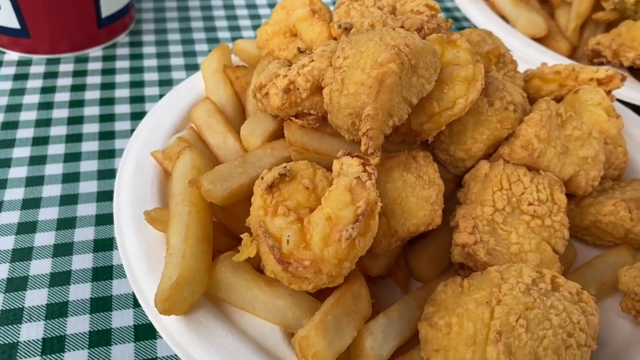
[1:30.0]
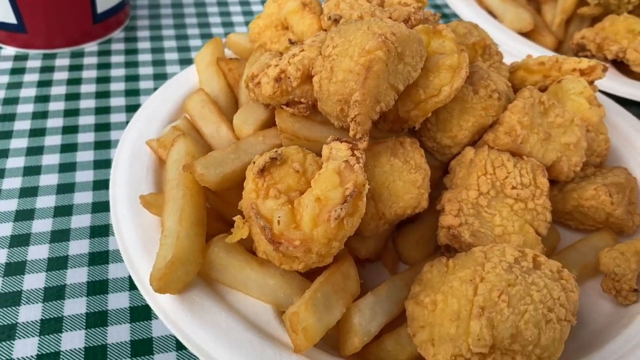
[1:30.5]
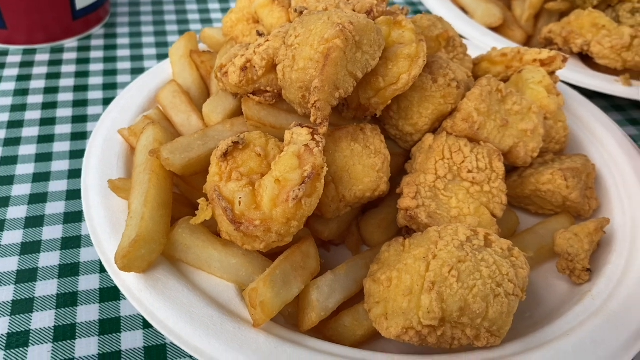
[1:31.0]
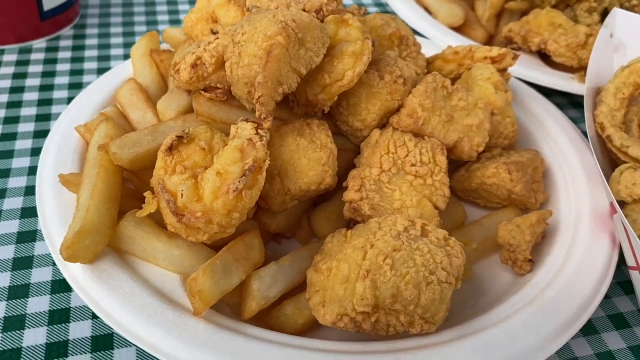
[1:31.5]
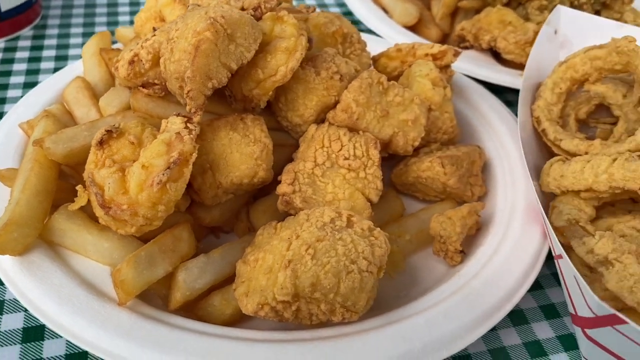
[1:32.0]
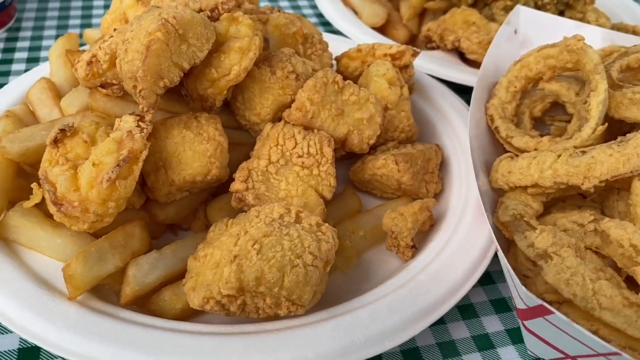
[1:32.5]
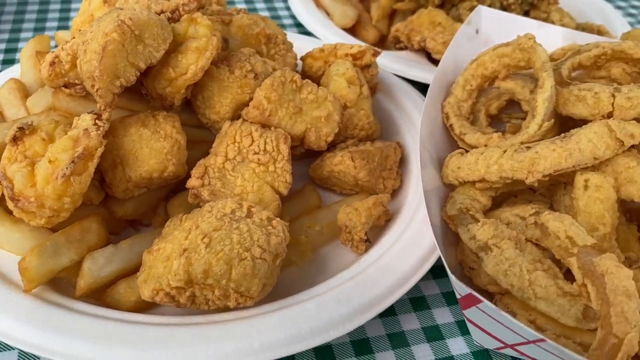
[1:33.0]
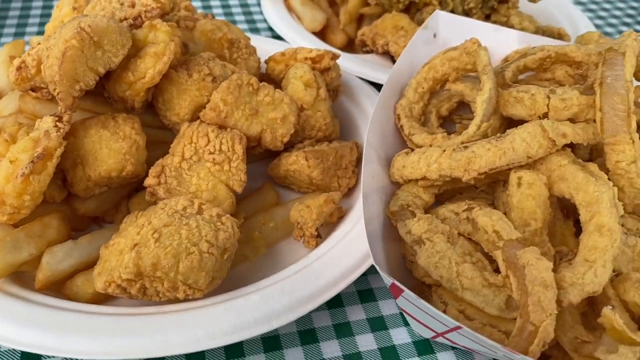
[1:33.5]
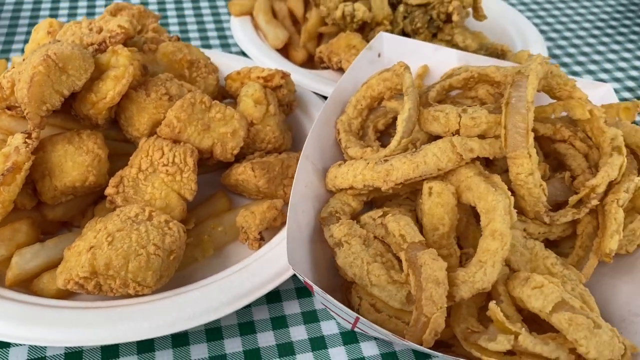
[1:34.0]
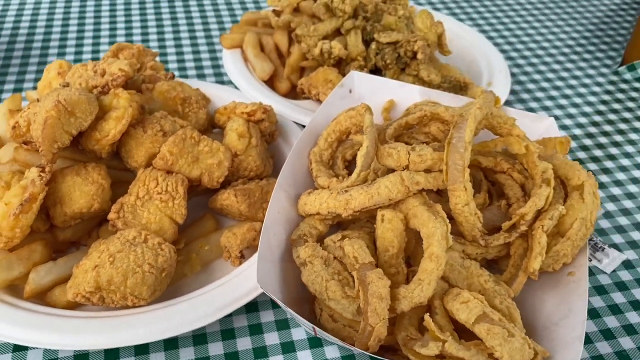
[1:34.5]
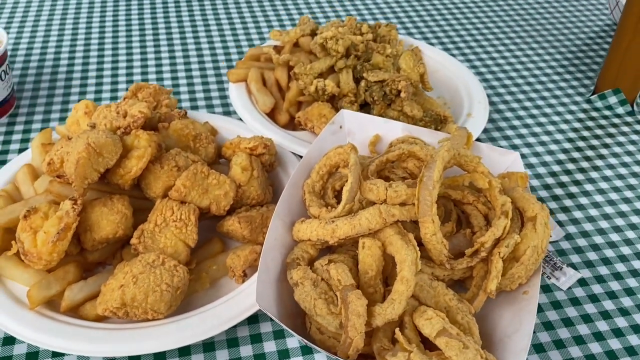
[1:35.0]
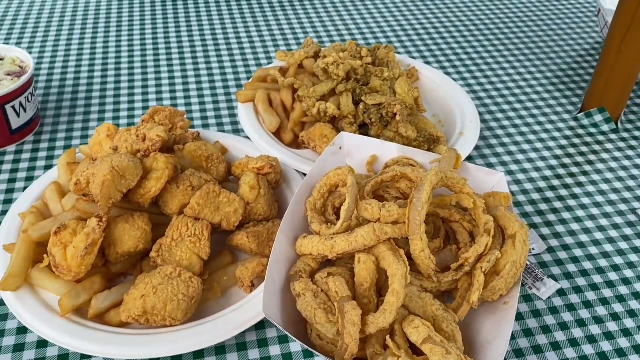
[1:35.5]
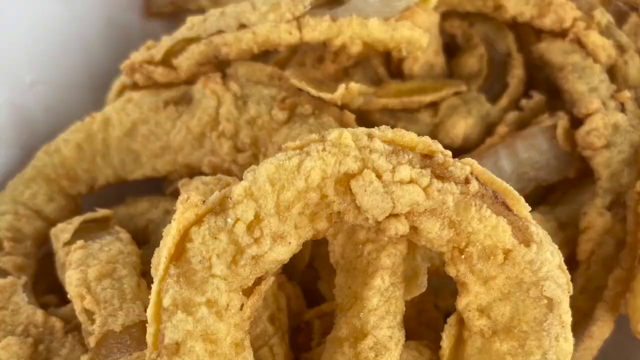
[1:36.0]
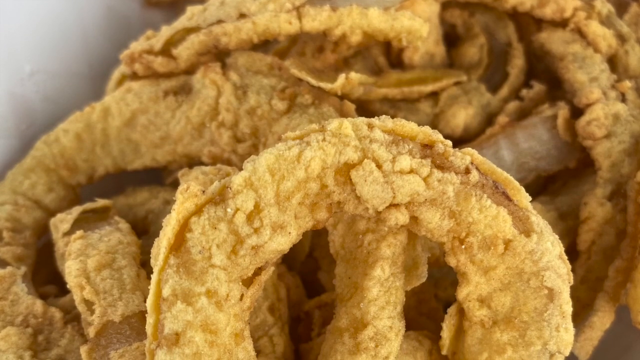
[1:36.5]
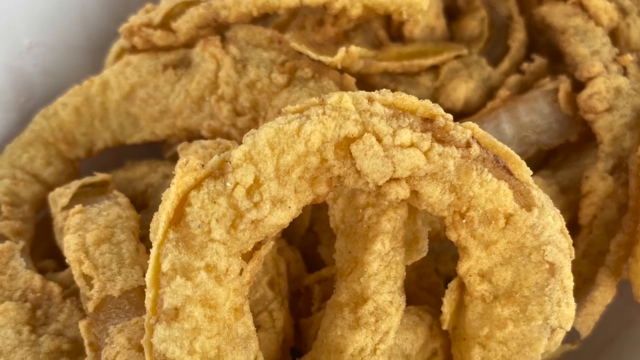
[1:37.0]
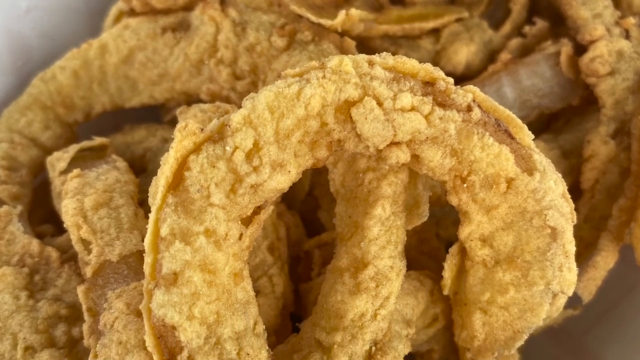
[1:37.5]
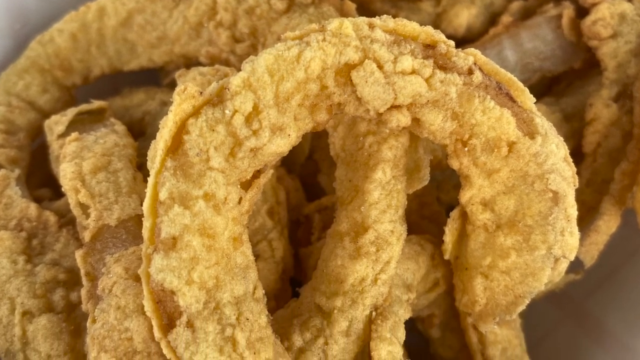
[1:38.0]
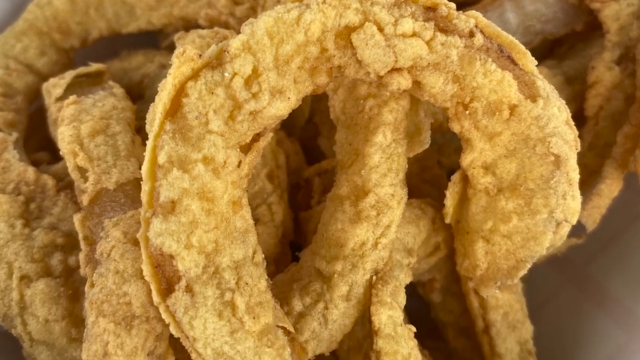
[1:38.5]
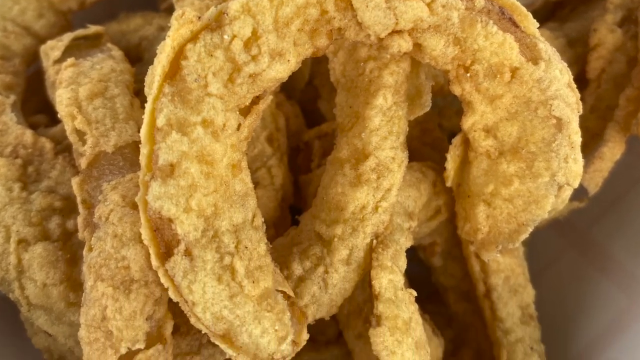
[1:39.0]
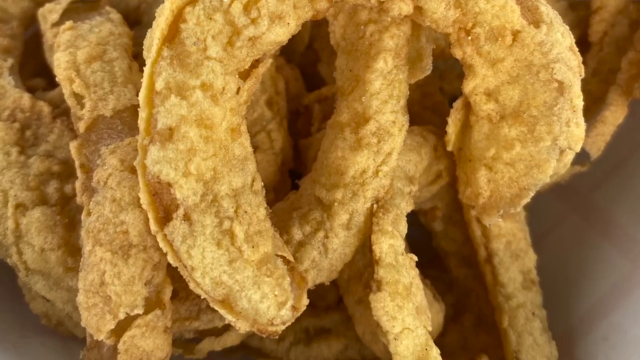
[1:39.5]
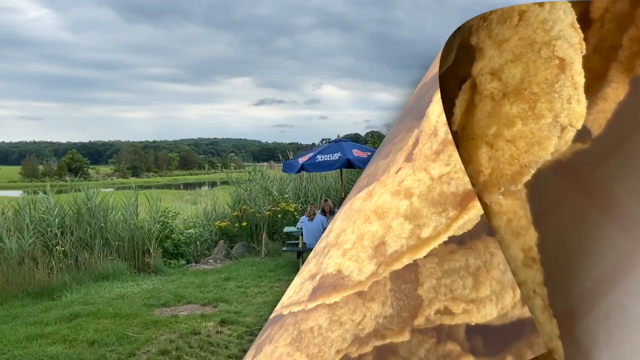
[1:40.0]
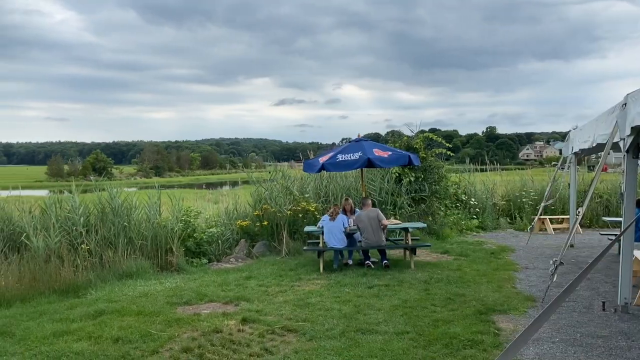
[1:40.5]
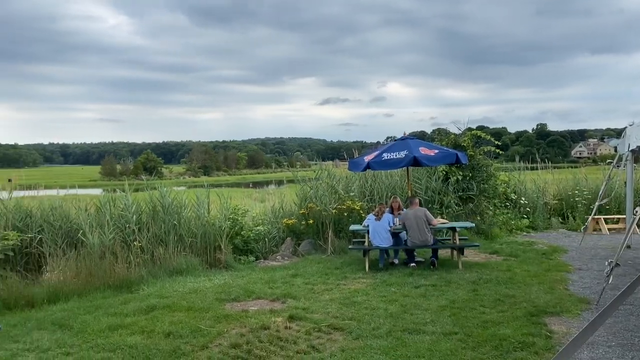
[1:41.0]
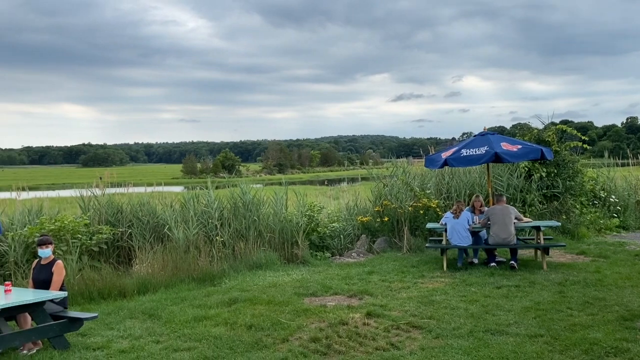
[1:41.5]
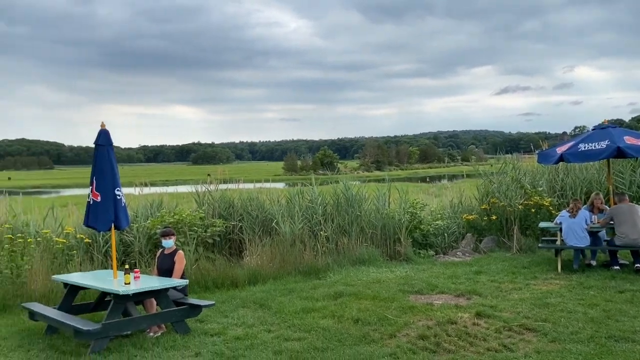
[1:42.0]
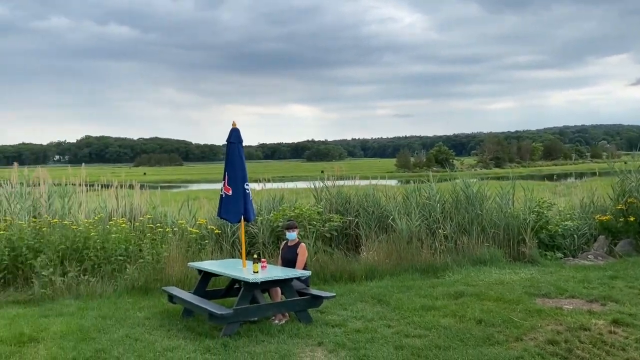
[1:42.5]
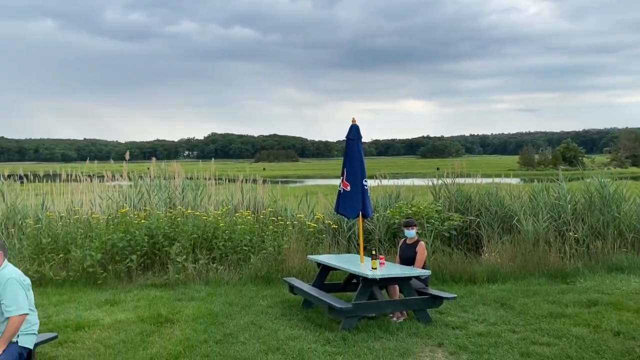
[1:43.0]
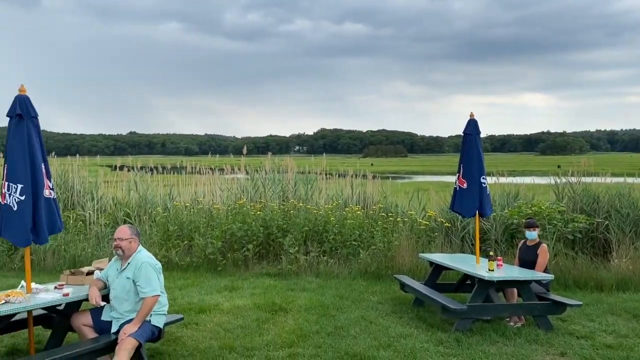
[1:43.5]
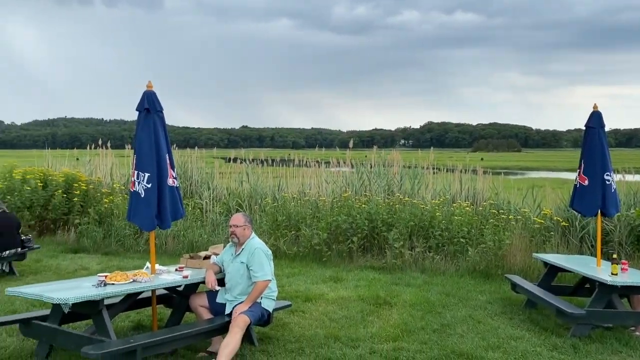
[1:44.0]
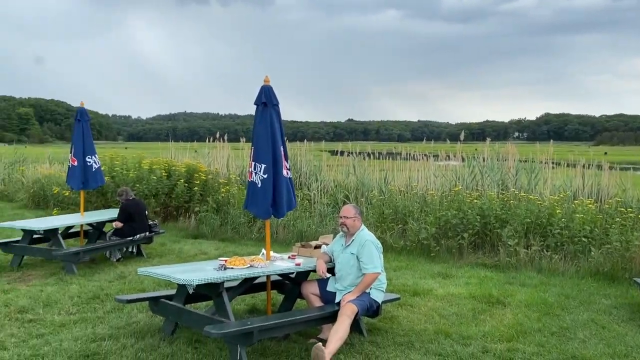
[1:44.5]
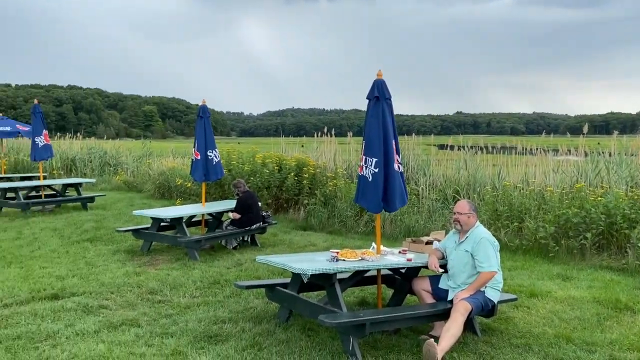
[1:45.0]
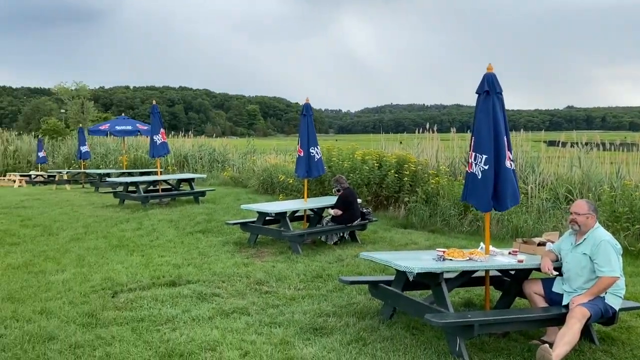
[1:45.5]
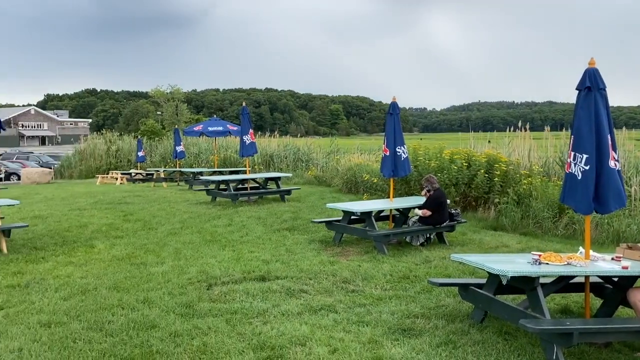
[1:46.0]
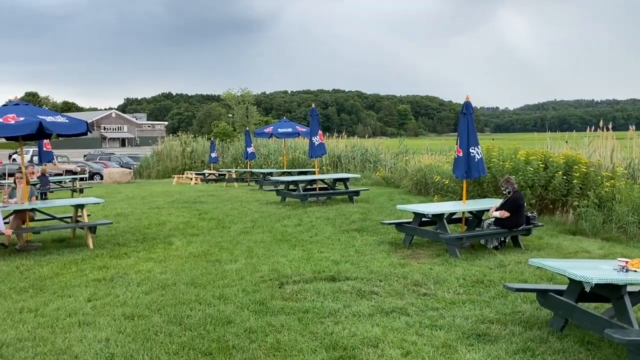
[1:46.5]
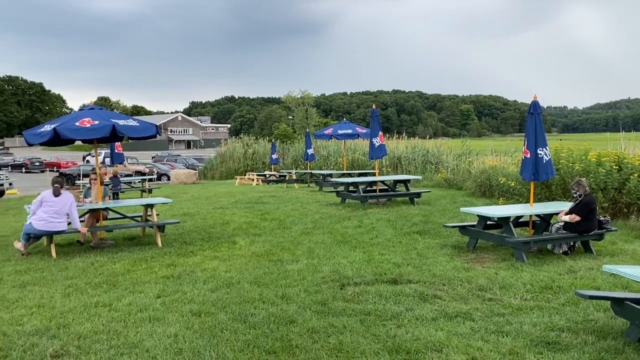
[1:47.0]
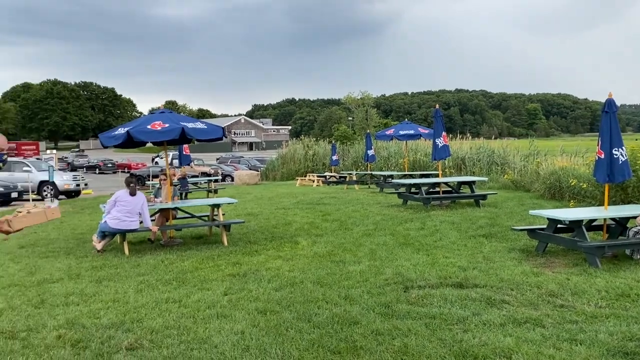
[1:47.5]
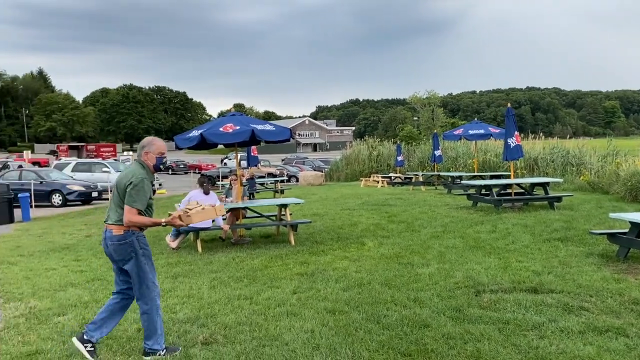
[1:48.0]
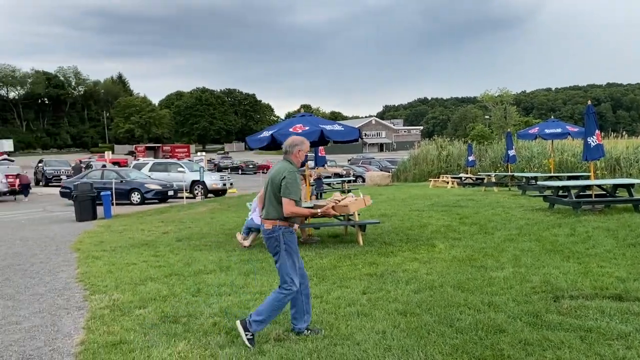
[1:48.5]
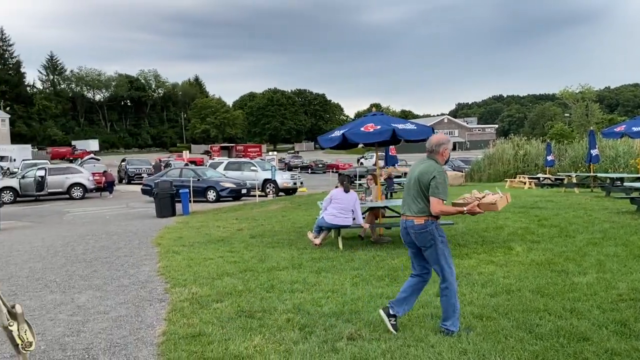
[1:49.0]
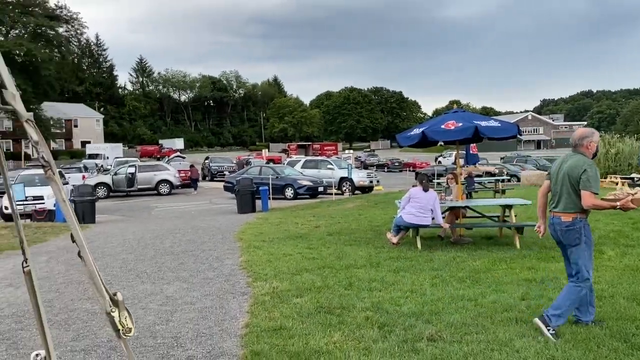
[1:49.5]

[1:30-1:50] The focus is on a plate that looks like white plastic, with a load of chips on the left side and, on top of them, something square and deep-fried that is unidentified. The bottom of a paper cup is visible in the top left of the screen, and in the top right is another plate of chips and something fried. The camera pans across to show all three plates, followed by a big close-up of the onion rings. The next shot is outside in a riverside setting: a field with water running through it, long and short grasses, trees, and picnic tables, each with a sun umbrella. People are sitting at the tables, most of which are occupied, and people are coming, going and walking. The camera pans to the left to show more tables. There is a car park, with people getting out of their cars and coming over, and there are some dust bins and recycling bins.